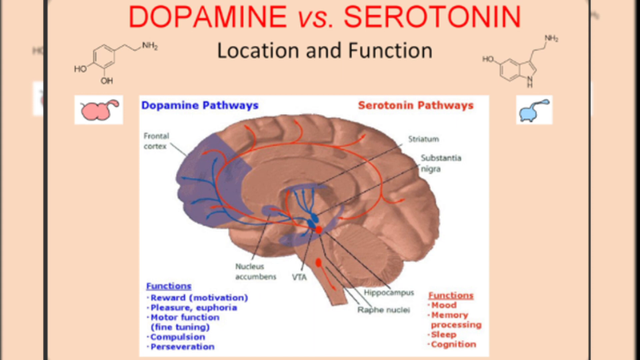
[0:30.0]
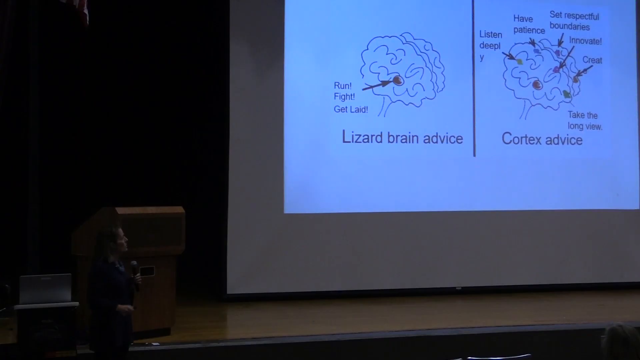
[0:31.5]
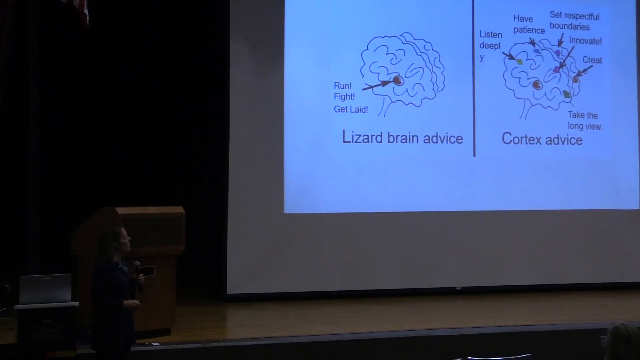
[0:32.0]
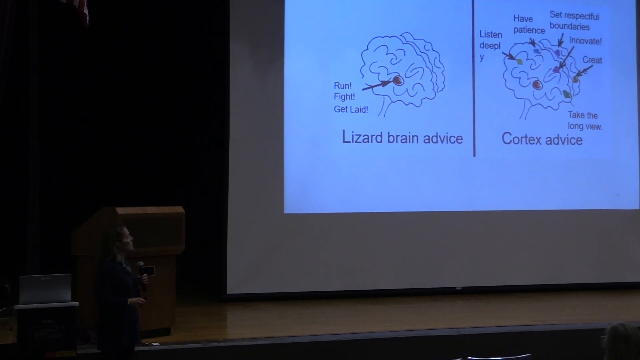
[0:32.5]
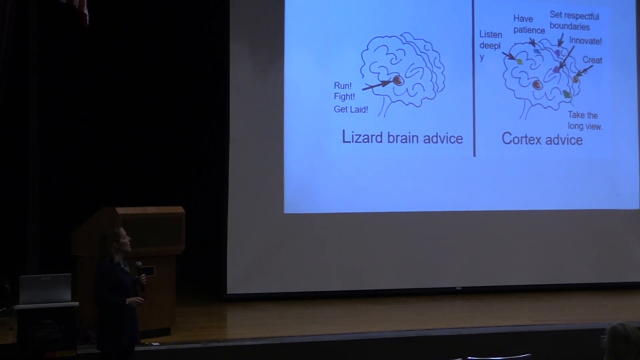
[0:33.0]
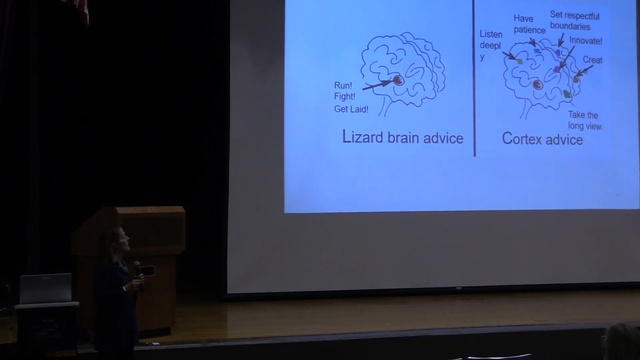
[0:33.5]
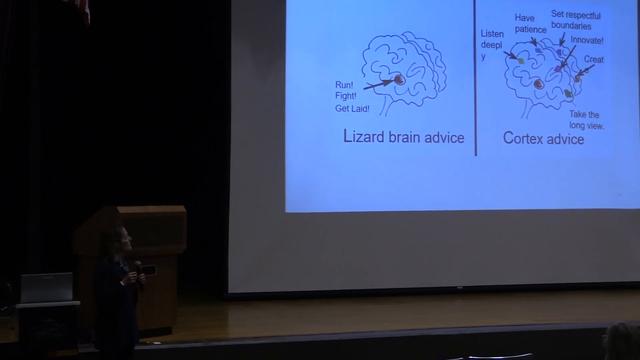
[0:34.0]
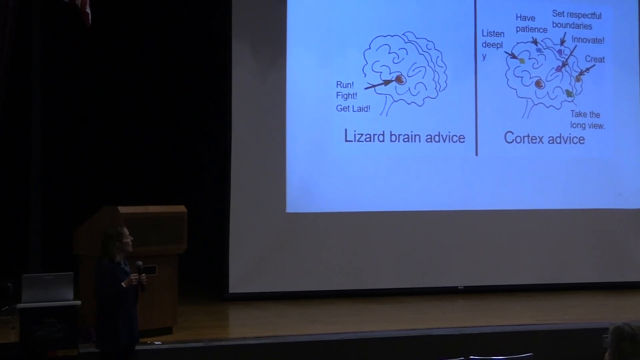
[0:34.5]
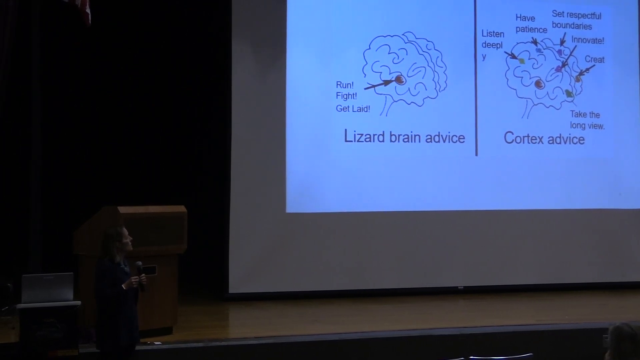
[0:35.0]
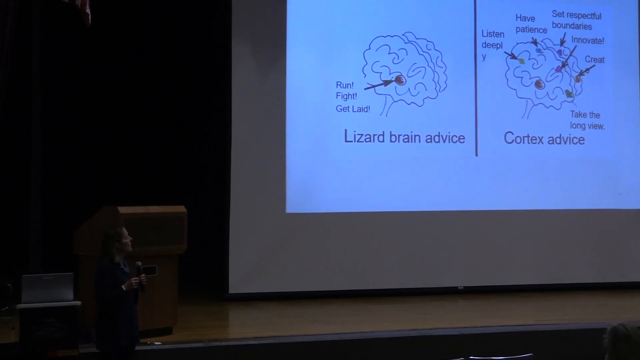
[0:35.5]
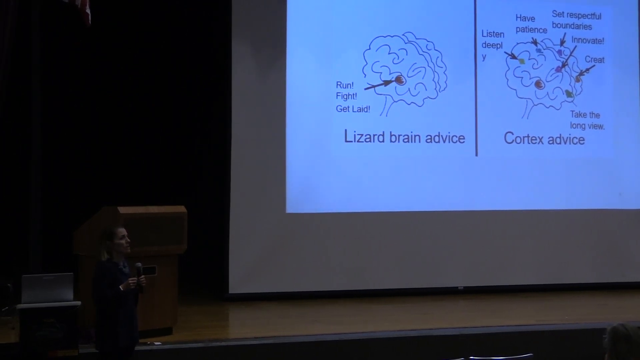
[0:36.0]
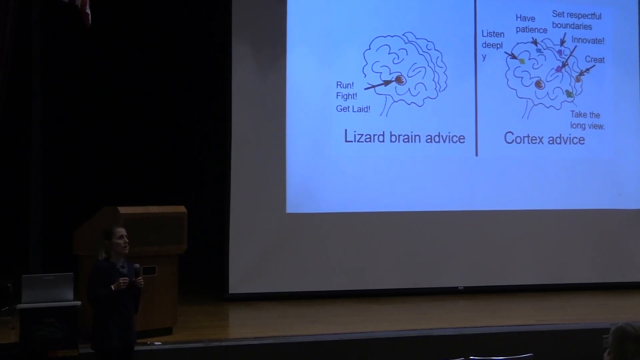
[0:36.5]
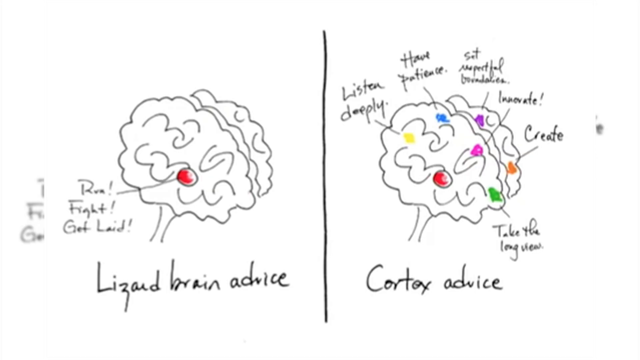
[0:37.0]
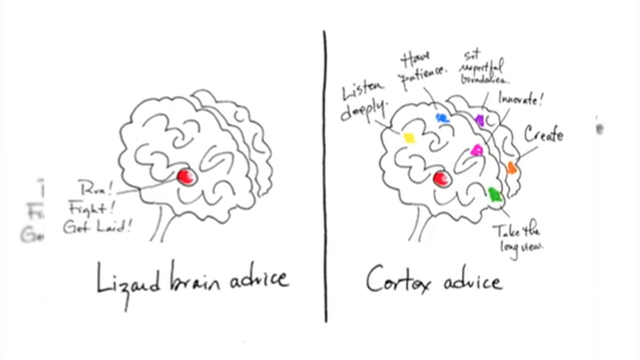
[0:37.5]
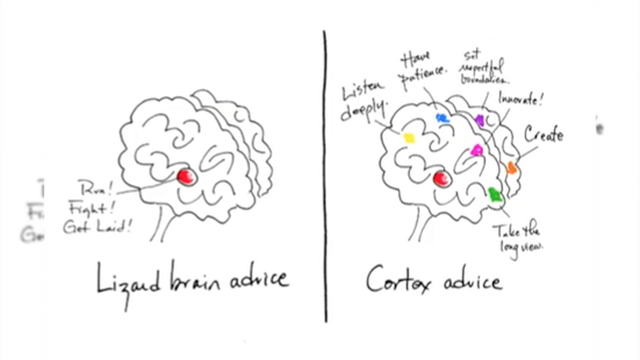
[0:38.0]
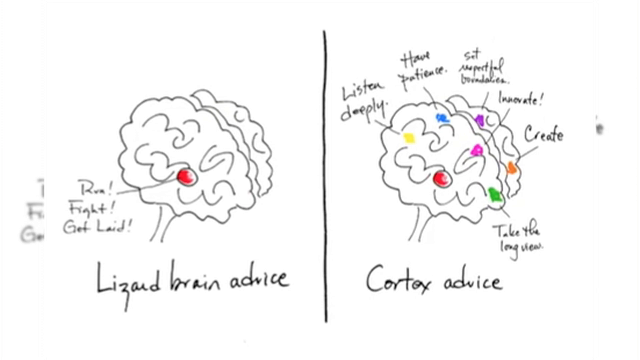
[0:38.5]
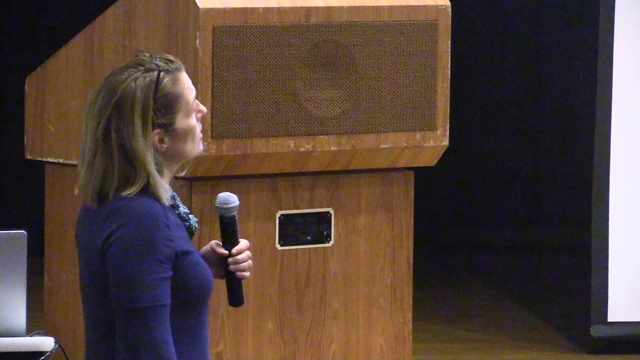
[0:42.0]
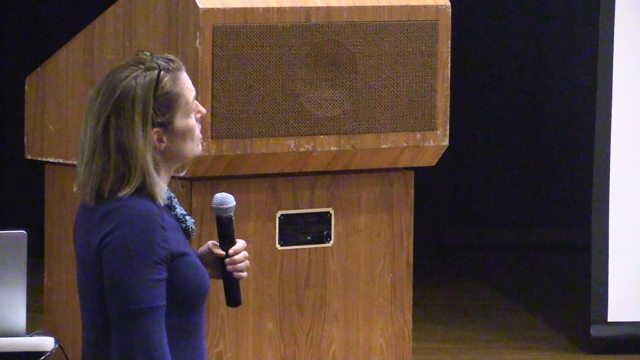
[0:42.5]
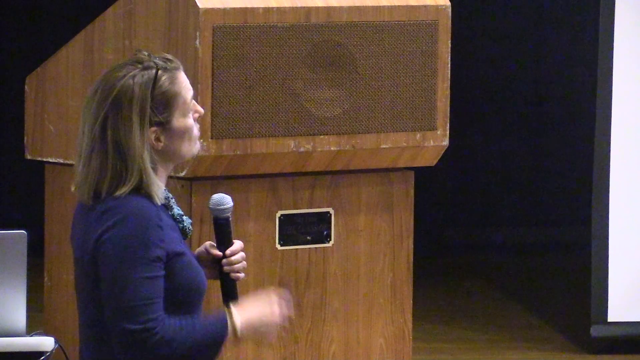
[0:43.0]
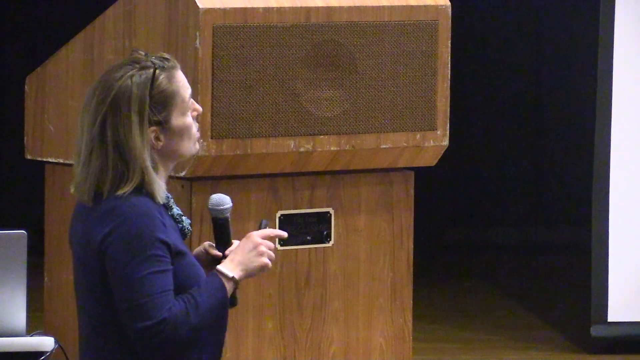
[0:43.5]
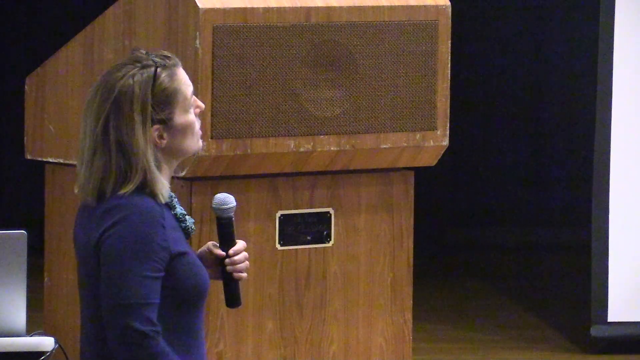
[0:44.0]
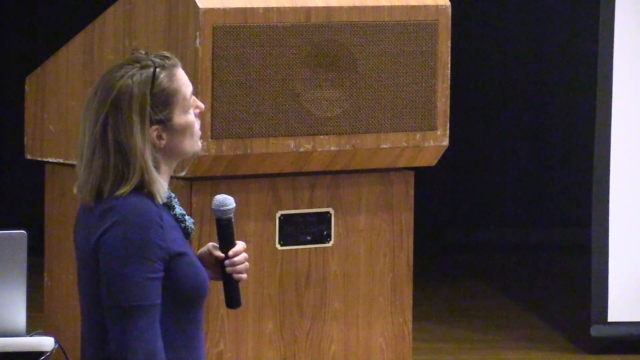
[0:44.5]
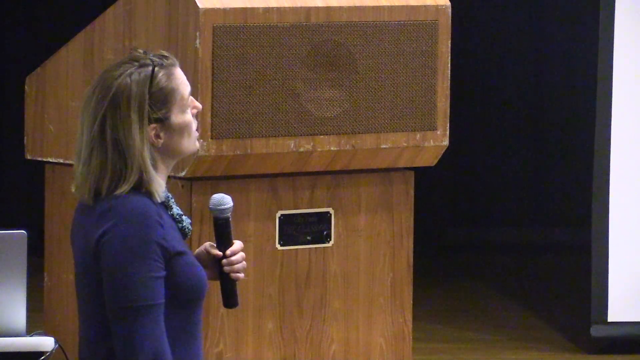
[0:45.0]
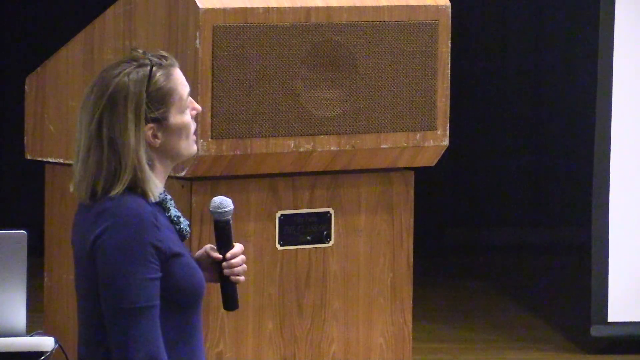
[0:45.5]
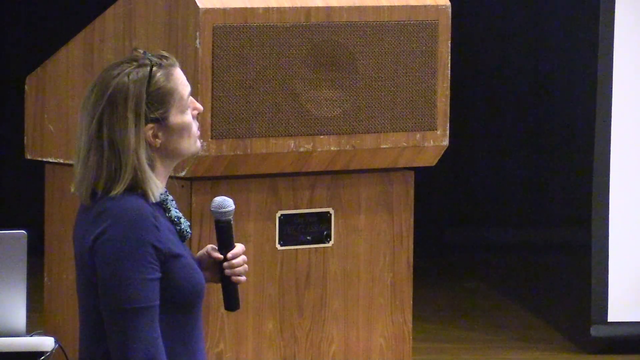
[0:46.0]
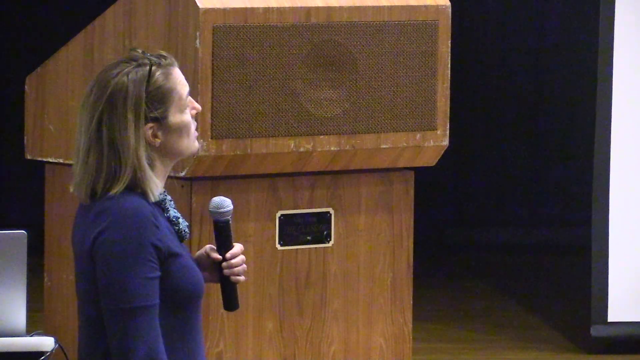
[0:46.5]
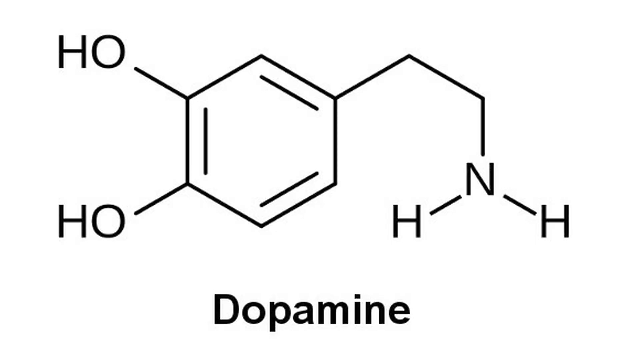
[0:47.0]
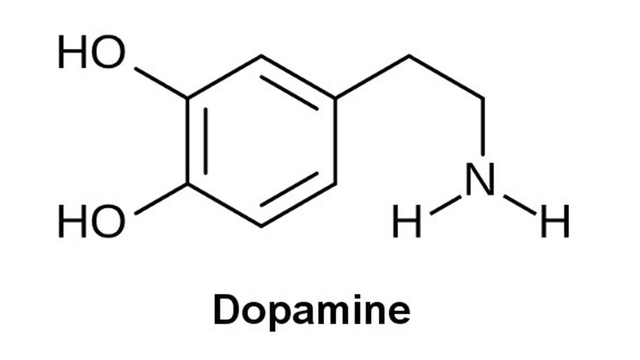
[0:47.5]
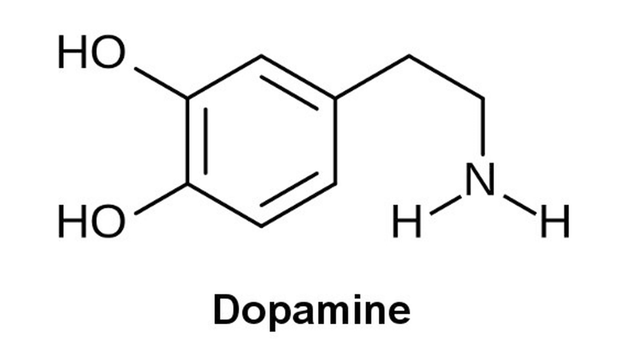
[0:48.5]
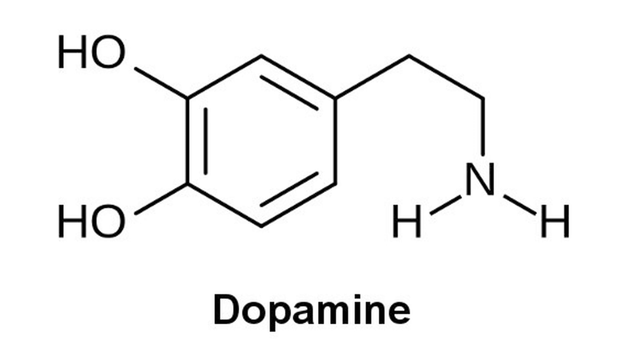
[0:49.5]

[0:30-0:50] An image of a brain appears, followed by a cut to an image of two types of brains that seems to be projected onto a large screen. On the left it says "lizard brain advice," with an arrow pointing to a section of the brain labeled "run, fight, get laid." On the right side of the image is "cortex advice," with a number of lines pointing to different areas of the brain, reading "listen deeply, have patience, set respectful boundaries, innovate, create, take the long view." The video cuts to a closer, slightly more colorful view of the same image. The doctor keeps looking at the image and pointing things out about it during her speech, and then the video cuts to the chemical symbol of dopamine.